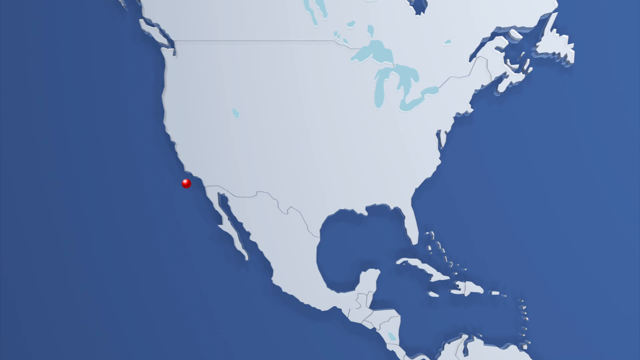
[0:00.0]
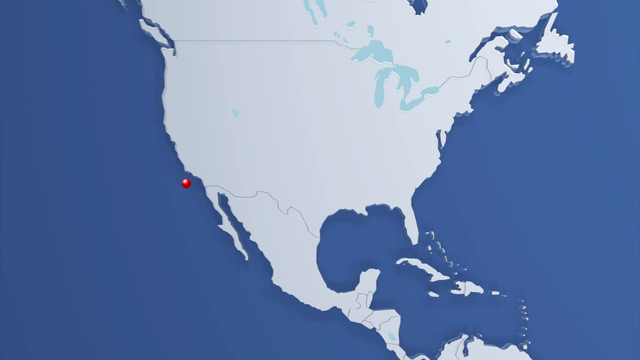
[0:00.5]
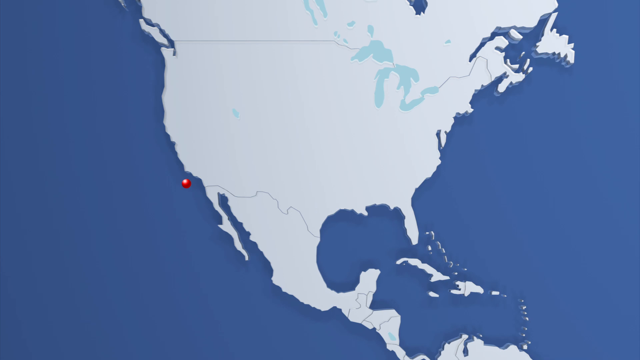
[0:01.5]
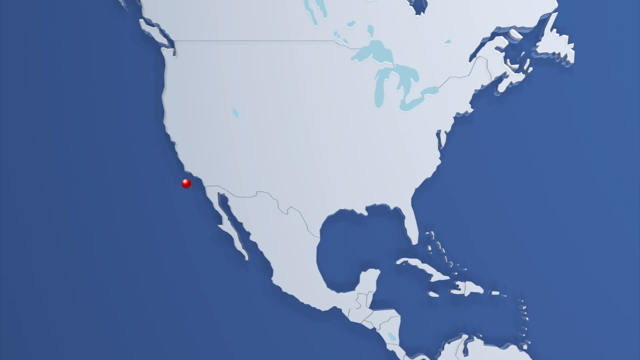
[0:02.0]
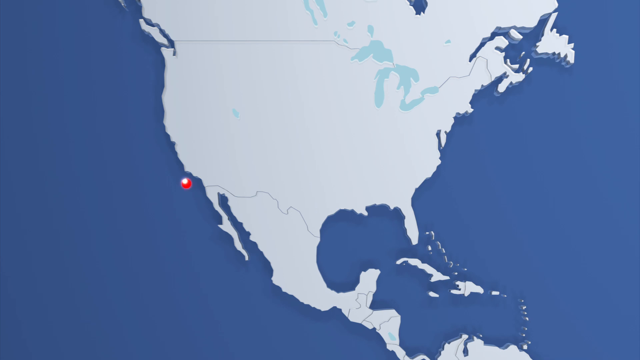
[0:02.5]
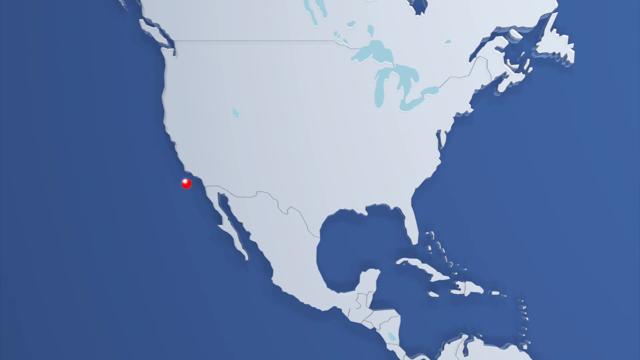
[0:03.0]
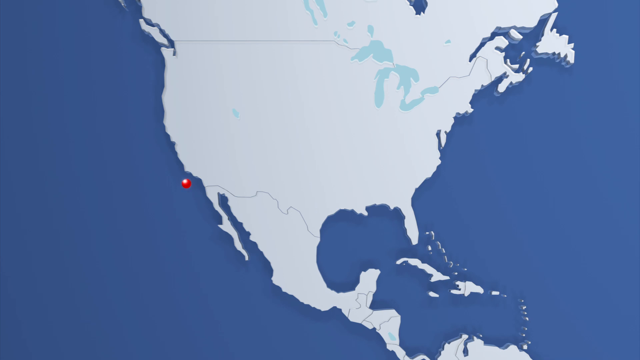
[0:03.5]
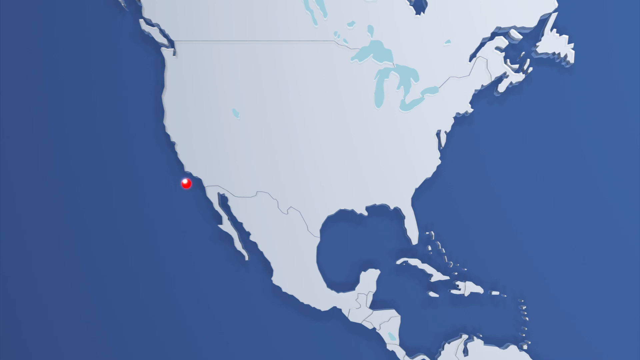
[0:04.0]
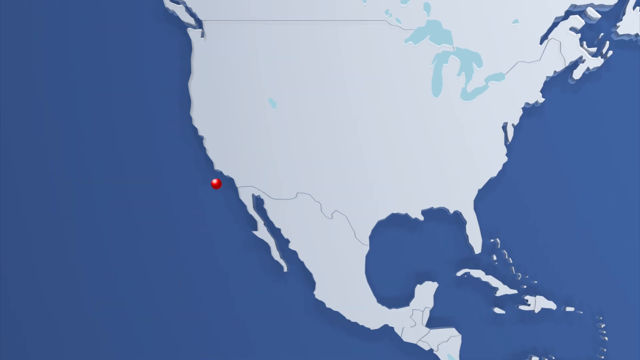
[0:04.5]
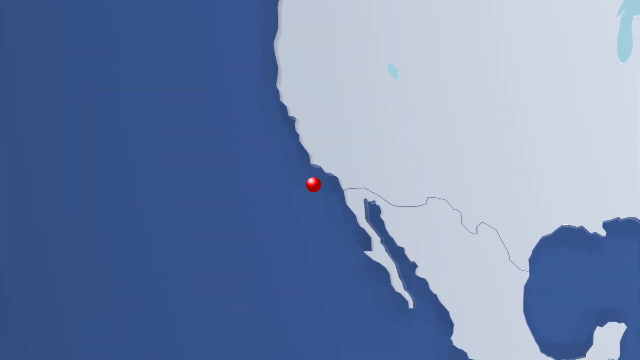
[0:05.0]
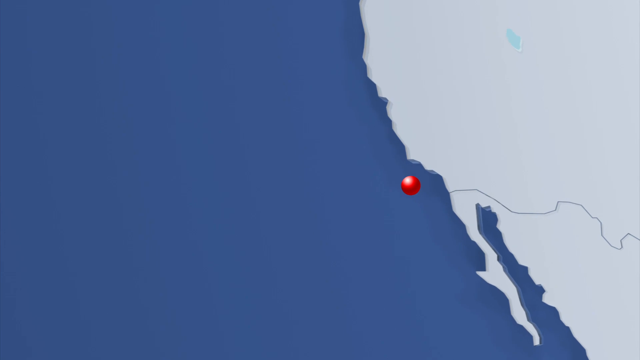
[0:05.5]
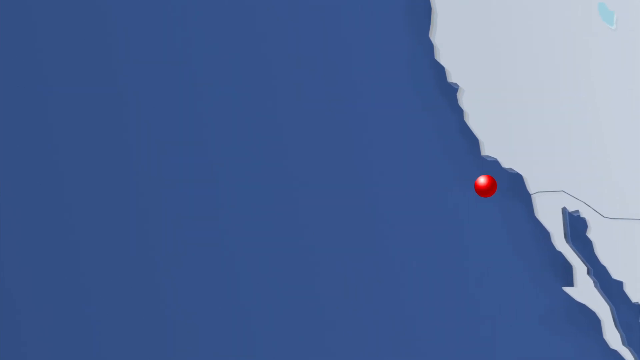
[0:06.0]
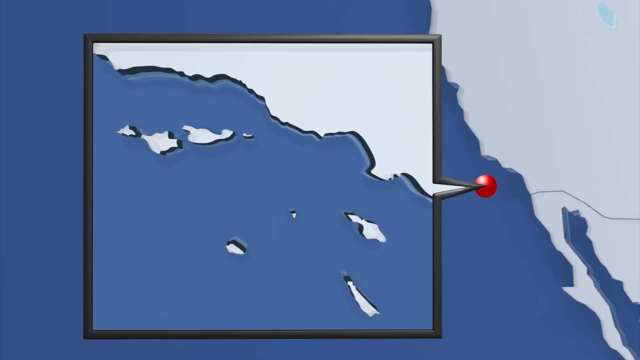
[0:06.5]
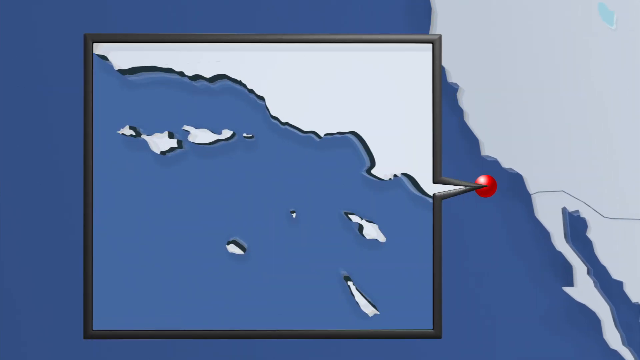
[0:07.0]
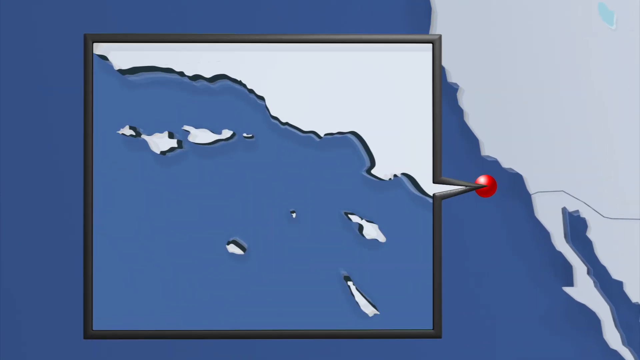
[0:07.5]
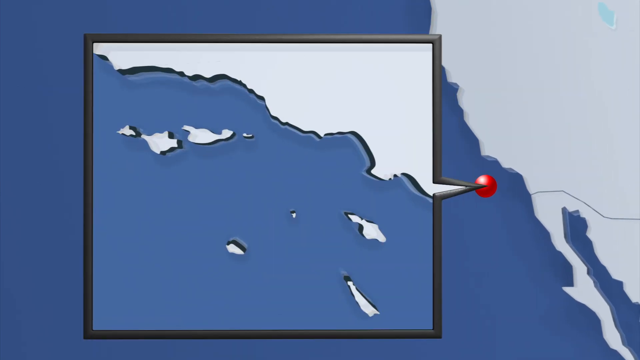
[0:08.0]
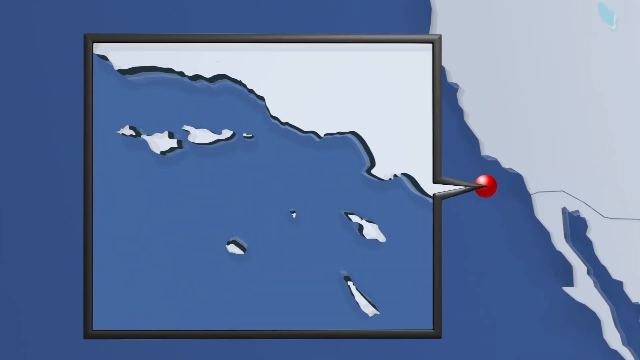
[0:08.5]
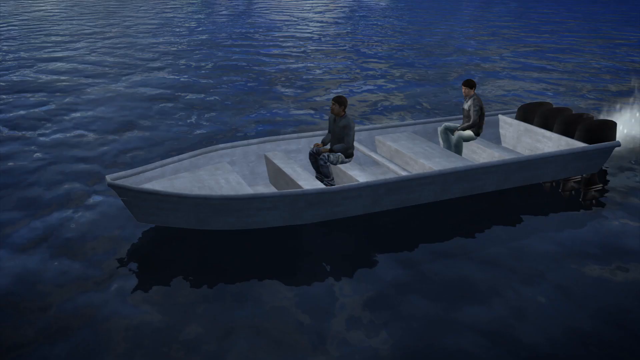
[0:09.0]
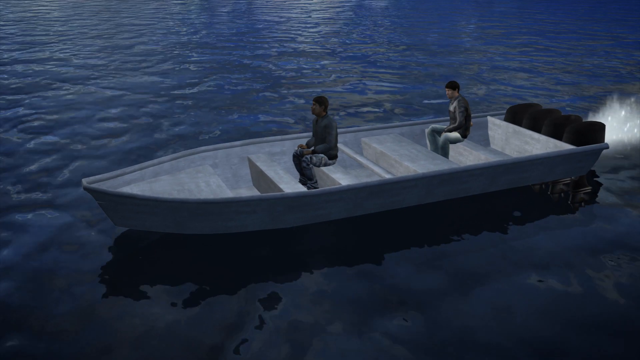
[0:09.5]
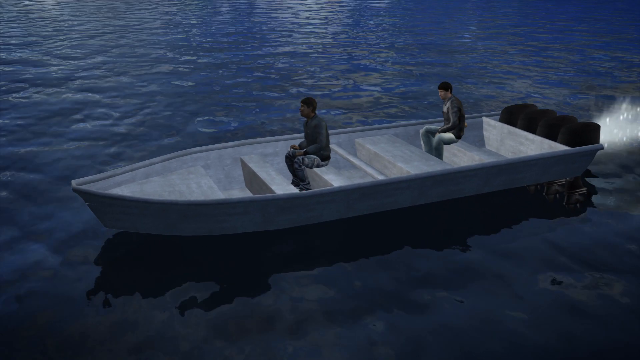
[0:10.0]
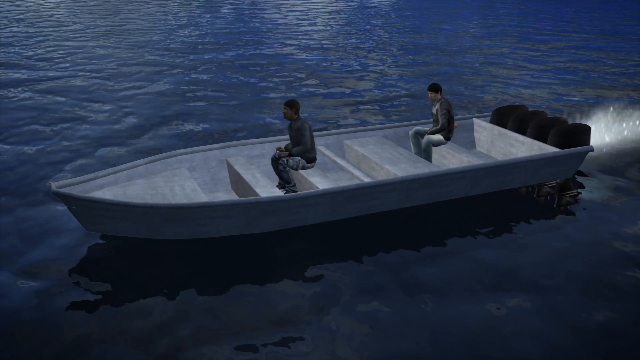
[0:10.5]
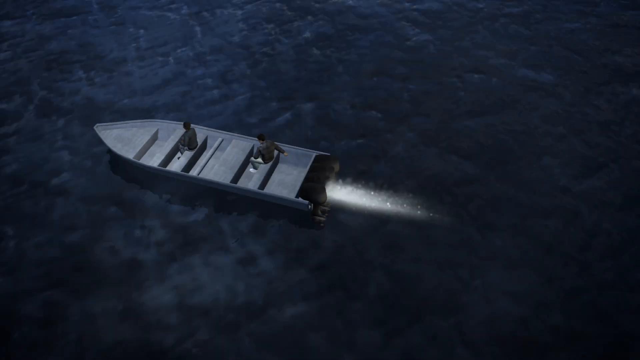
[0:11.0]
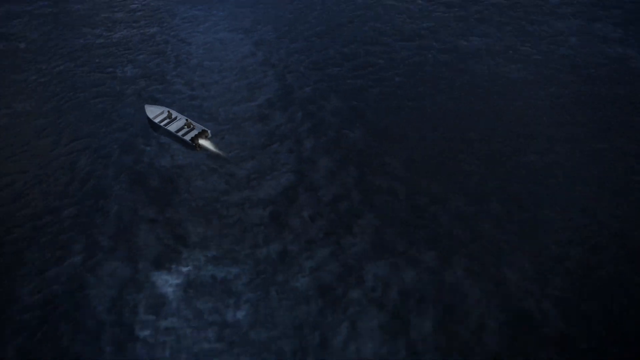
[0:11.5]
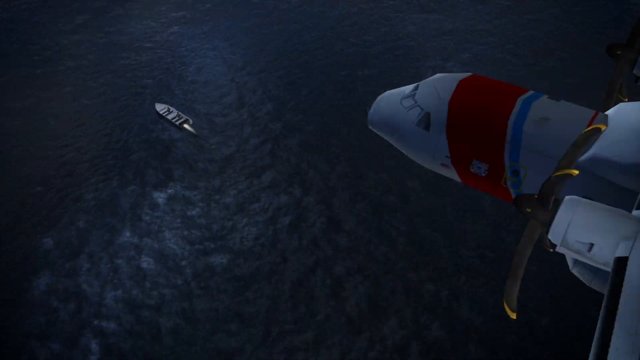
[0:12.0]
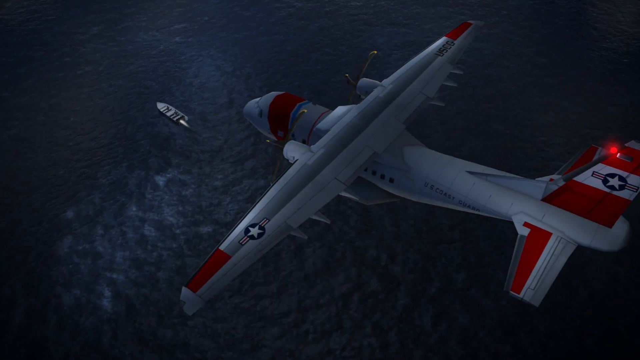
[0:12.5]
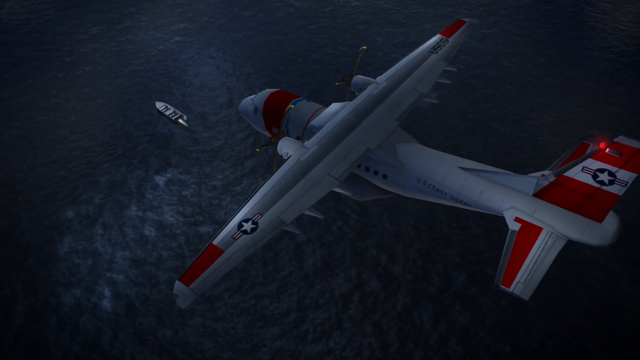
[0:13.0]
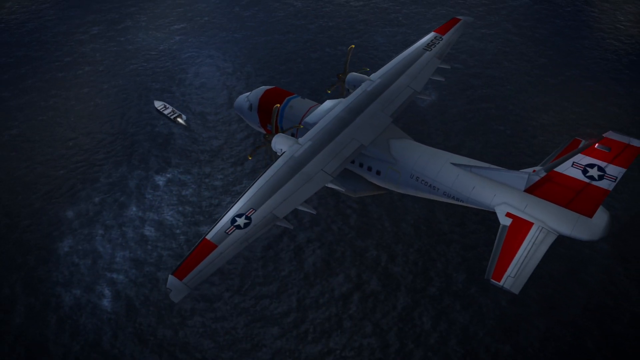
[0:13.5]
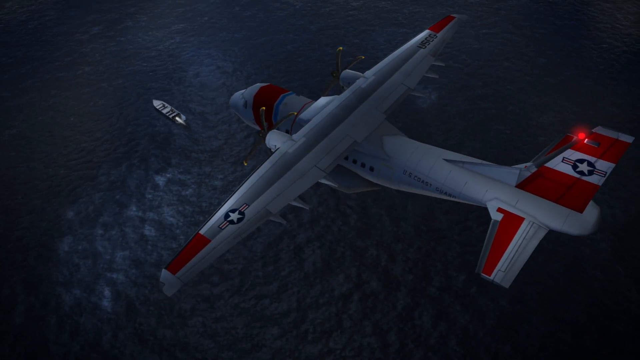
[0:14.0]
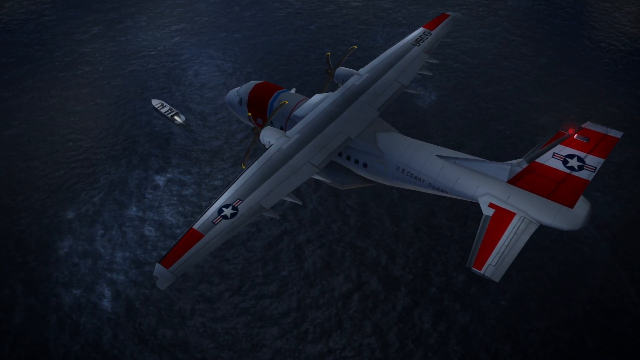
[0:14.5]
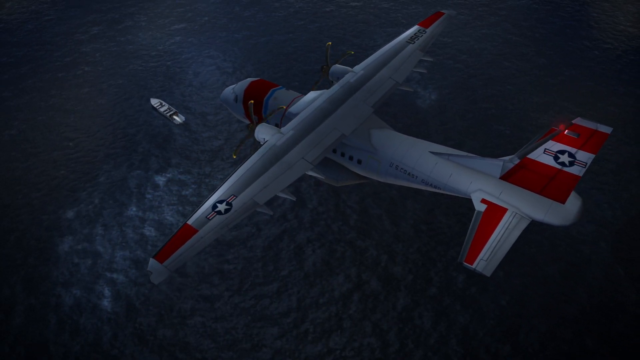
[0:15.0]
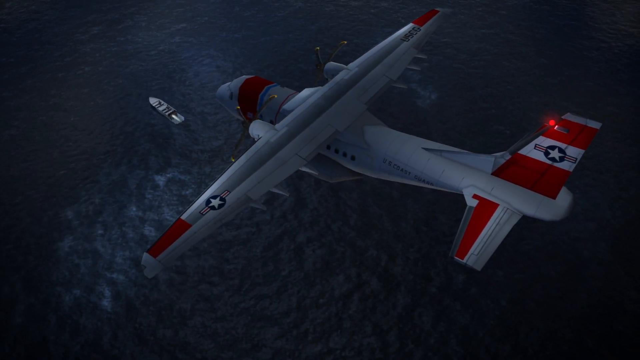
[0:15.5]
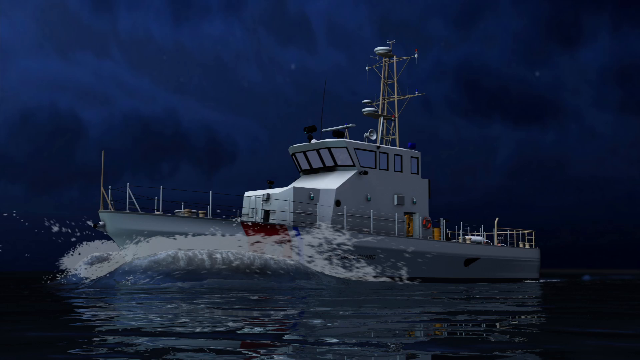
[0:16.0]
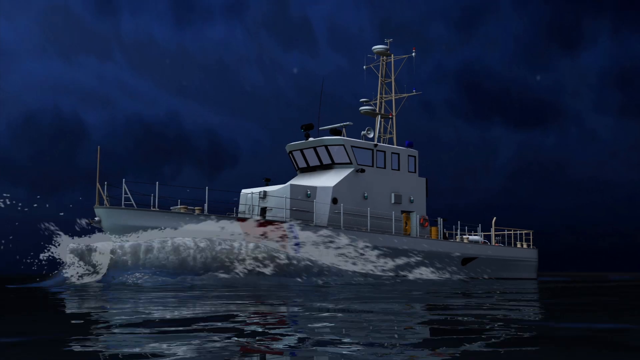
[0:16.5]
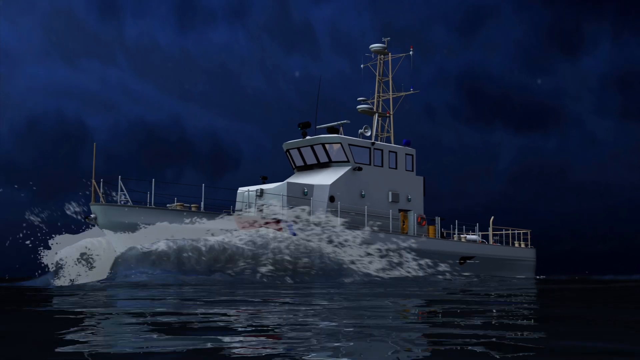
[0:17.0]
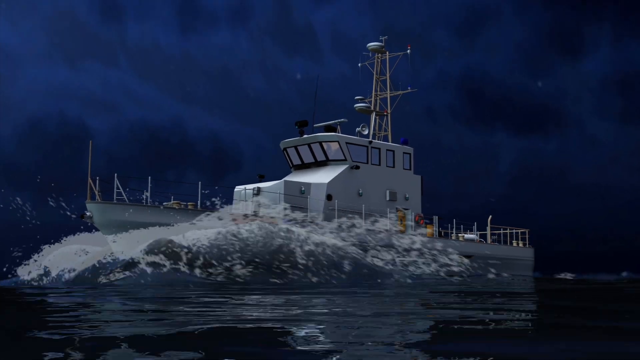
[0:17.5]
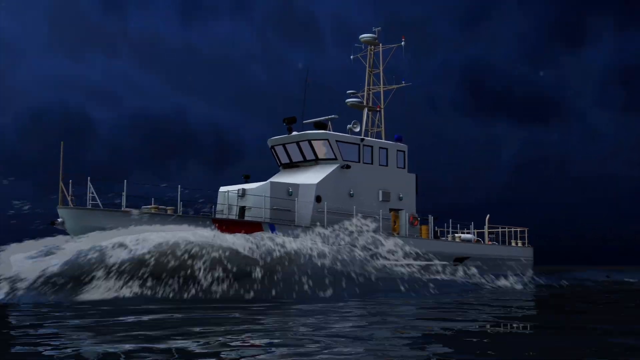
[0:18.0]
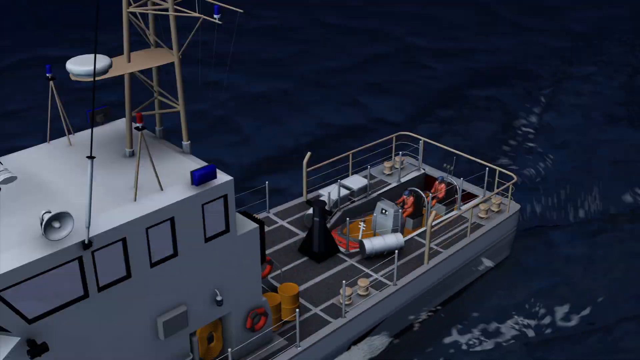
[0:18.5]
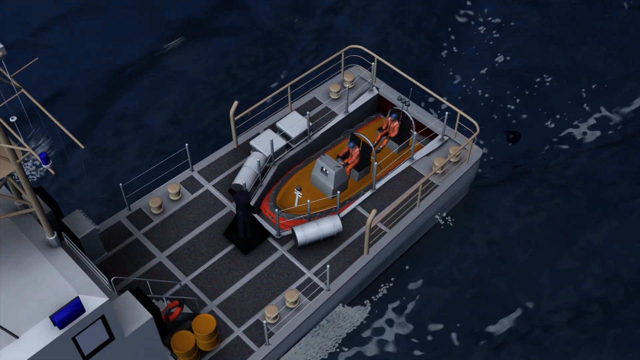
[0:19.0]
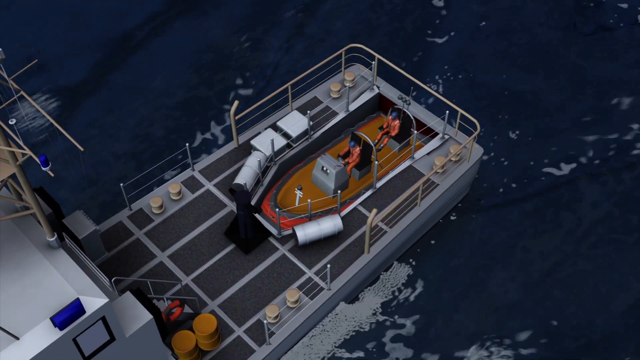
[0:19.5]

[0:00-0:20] The video opens on a map of the United States with a pin a little way out in the ocean, right between California and Mexico. The pin is a red circle with a highlight on it, and it glows. The map has little shading and few borders, except those between countries. The camera pans right and down onto the pin, and a square pop-up zooms in farther to show an archipelago of islands off the coast of North America. The scene cuts to a CGI shot of a small boat in the water with two men in it; the boat has an engine, and the men are seated on bench seats. The camera pans out and to the right to reveal a small plane in the air. It is red and white, with a star symbol and a blue circle on the wing, red on the wings and tail, and two propellers. Next comes a shot of a smaller boat, like a smaller ship, in the water. The view zooms up and to the right to show two men driving the ship; they wear orange and have something blue on their heads. The ship is propelled through the water. Everything is rendered in a sort of older-fashioned CGI, like that of the late 90s or early 2000s.